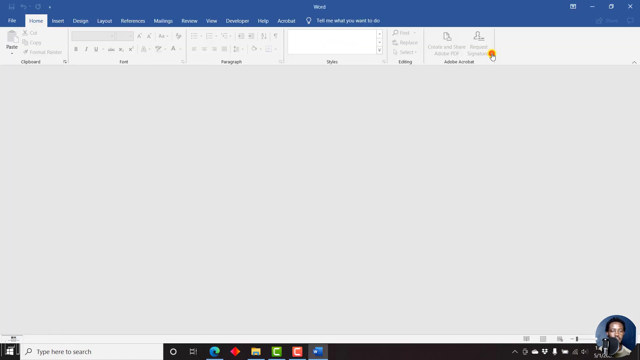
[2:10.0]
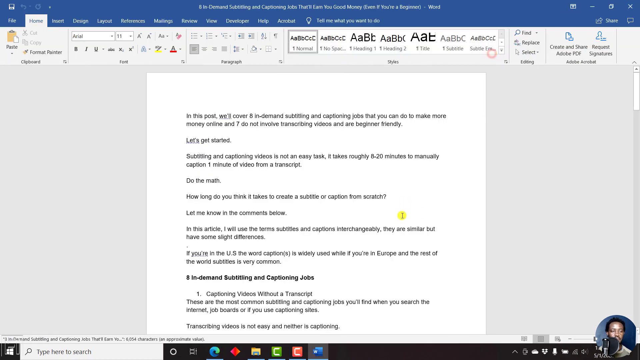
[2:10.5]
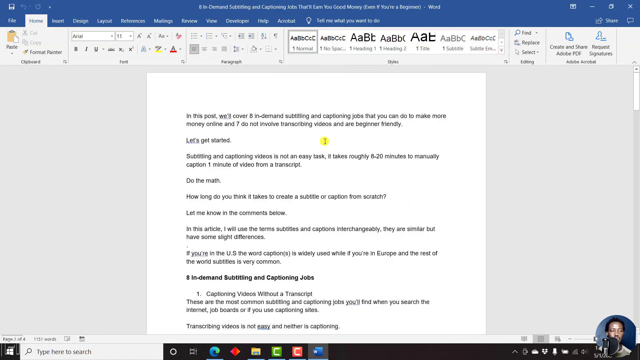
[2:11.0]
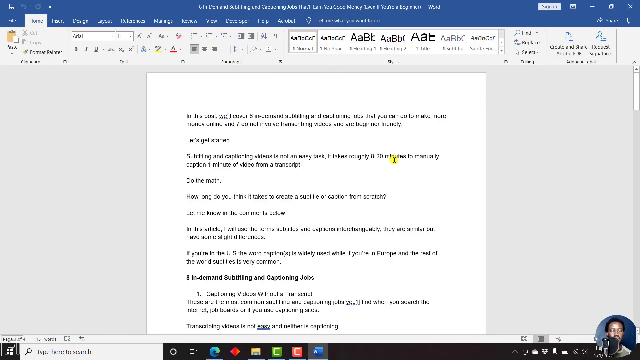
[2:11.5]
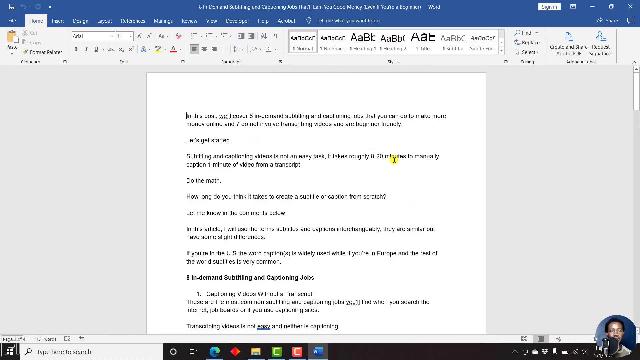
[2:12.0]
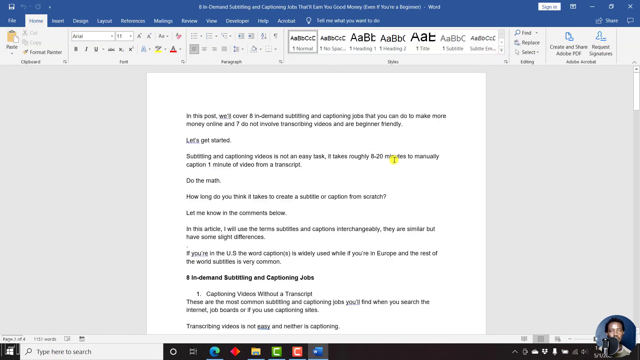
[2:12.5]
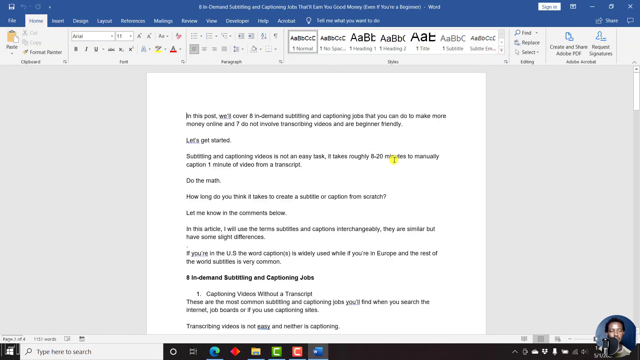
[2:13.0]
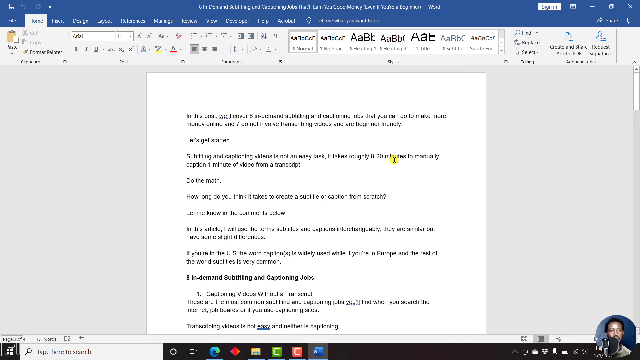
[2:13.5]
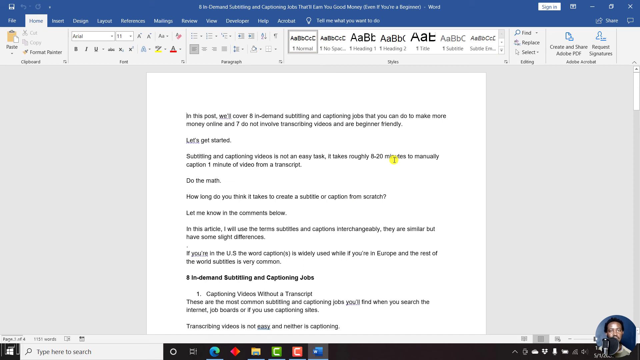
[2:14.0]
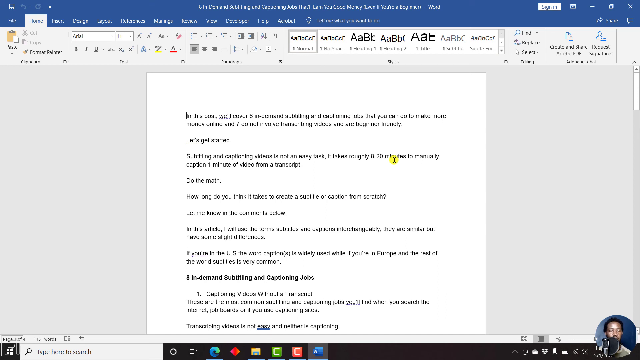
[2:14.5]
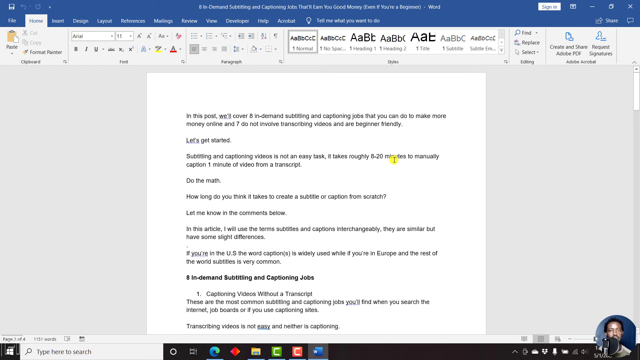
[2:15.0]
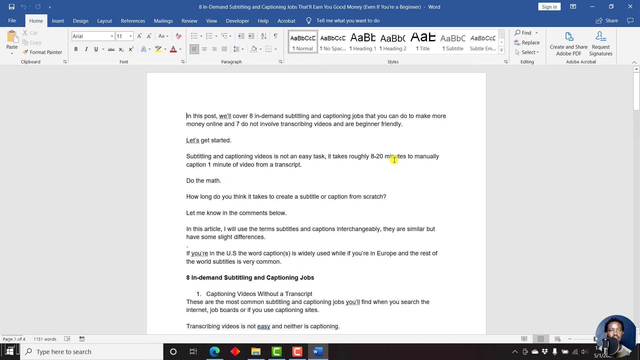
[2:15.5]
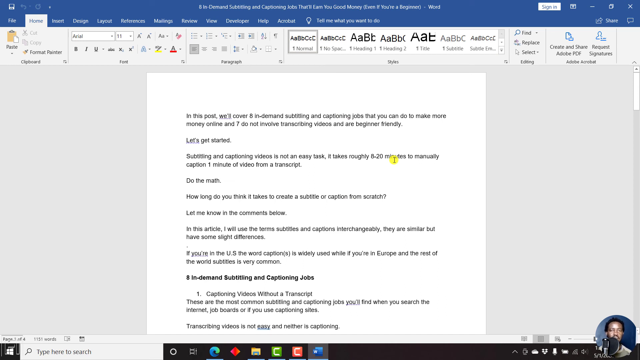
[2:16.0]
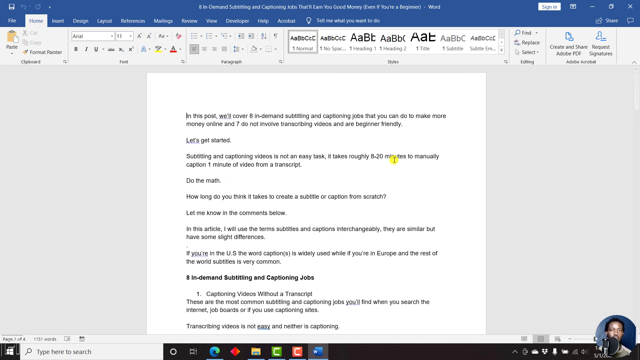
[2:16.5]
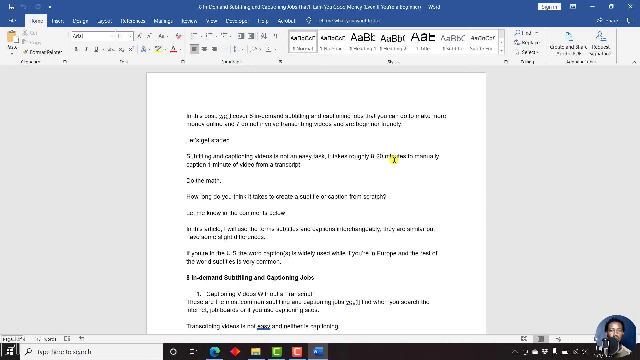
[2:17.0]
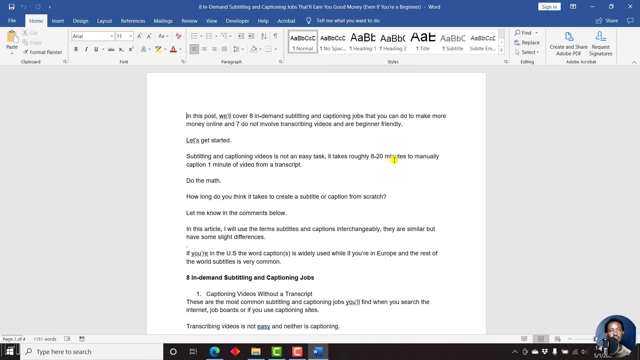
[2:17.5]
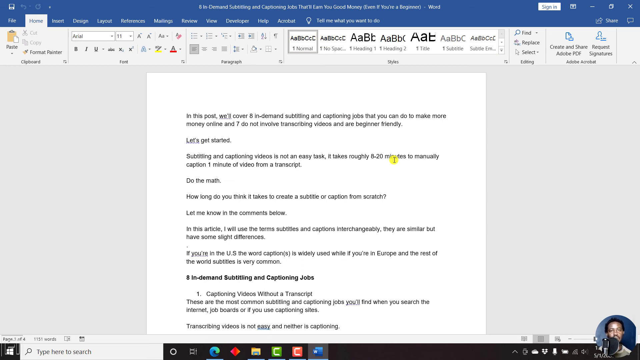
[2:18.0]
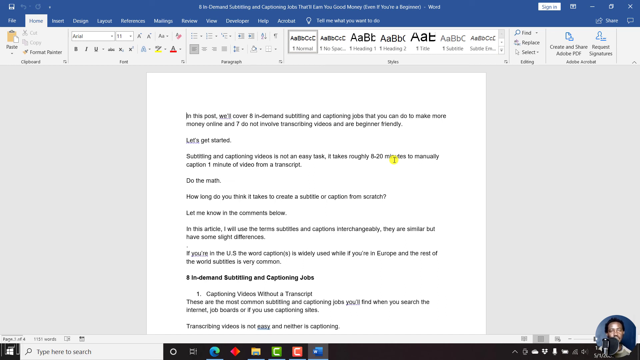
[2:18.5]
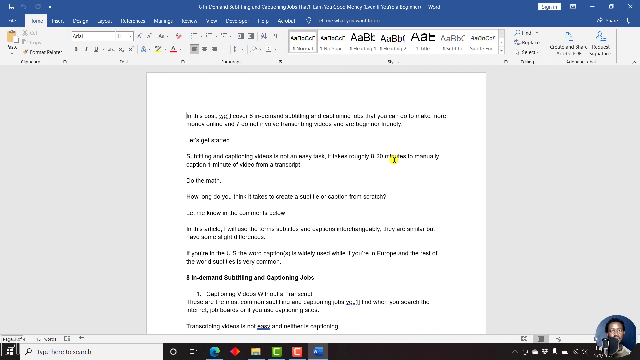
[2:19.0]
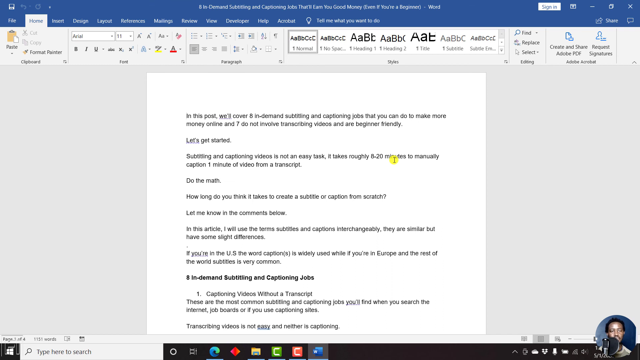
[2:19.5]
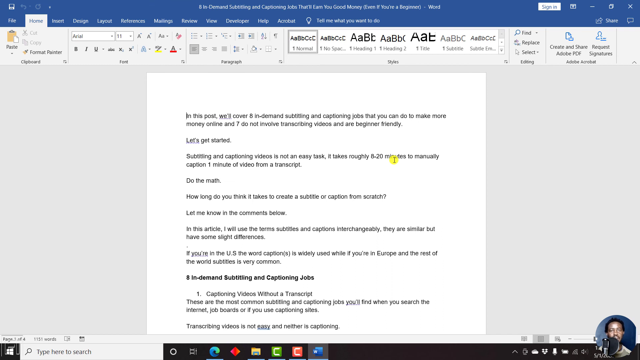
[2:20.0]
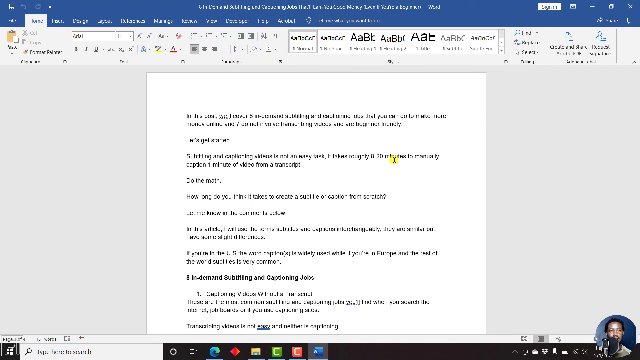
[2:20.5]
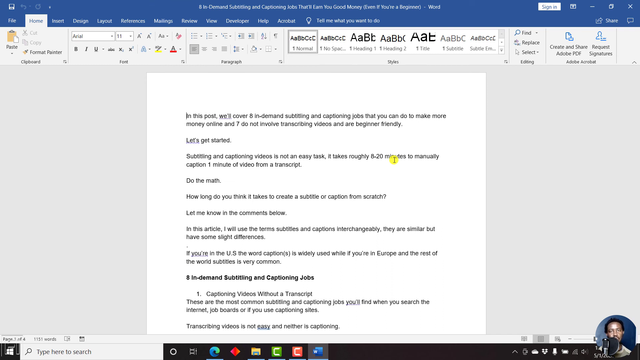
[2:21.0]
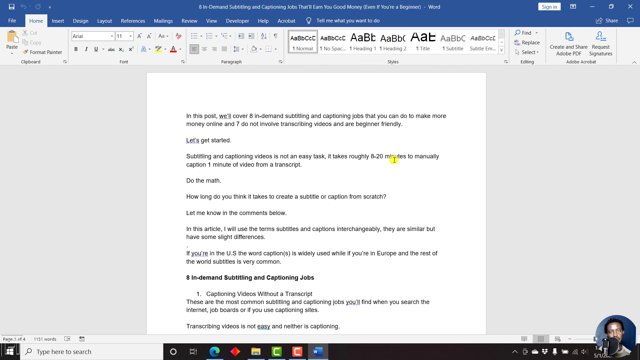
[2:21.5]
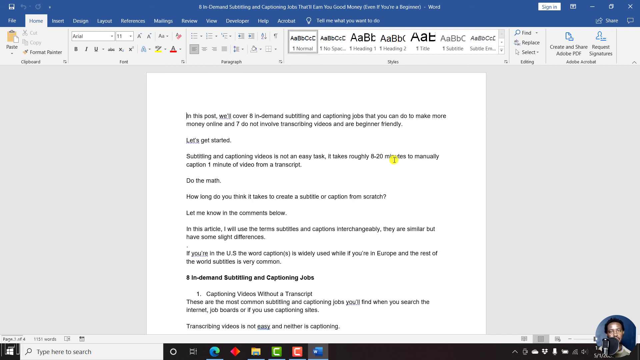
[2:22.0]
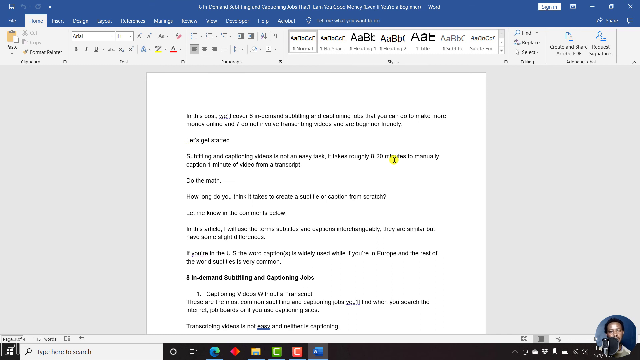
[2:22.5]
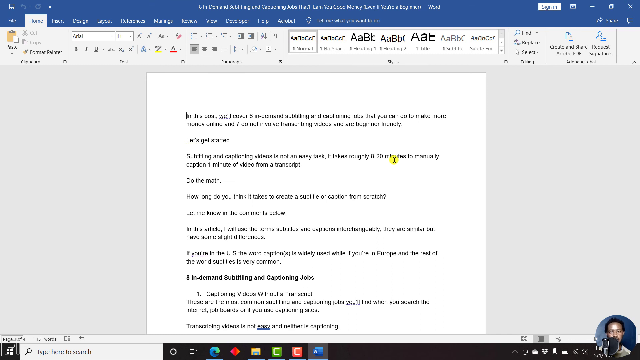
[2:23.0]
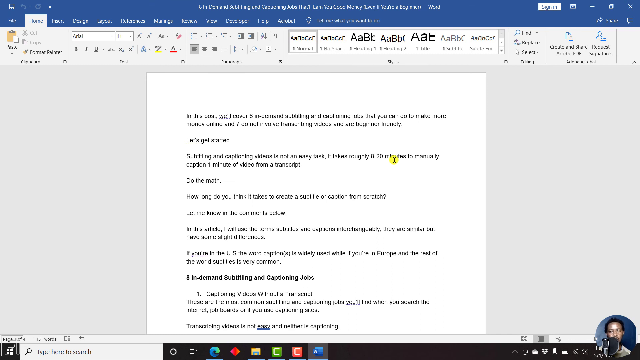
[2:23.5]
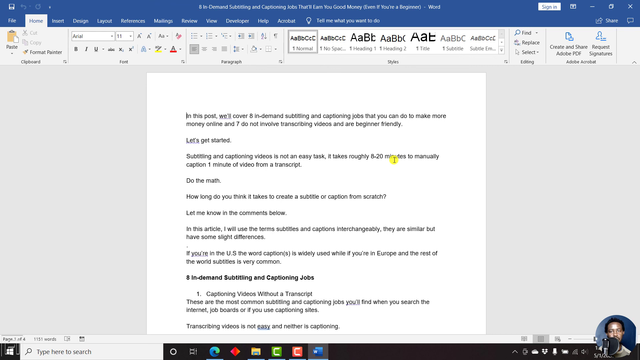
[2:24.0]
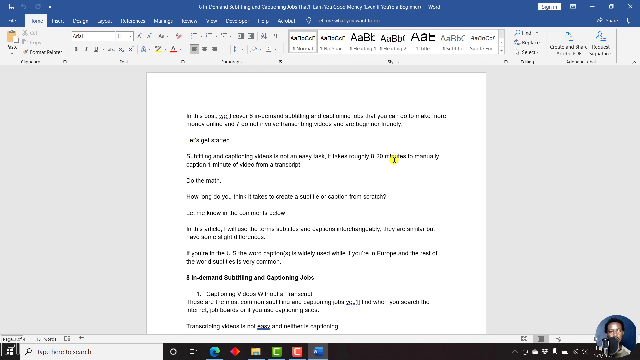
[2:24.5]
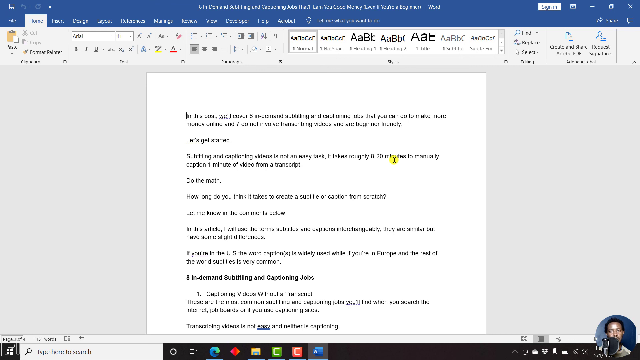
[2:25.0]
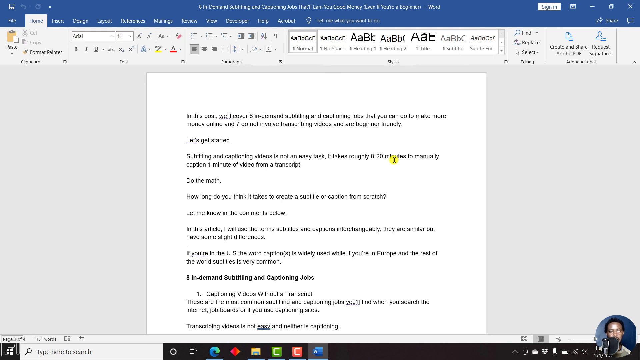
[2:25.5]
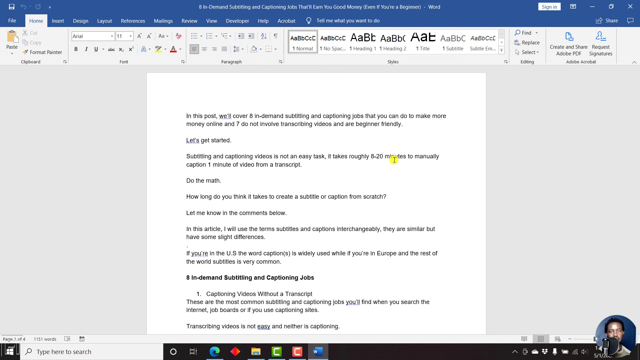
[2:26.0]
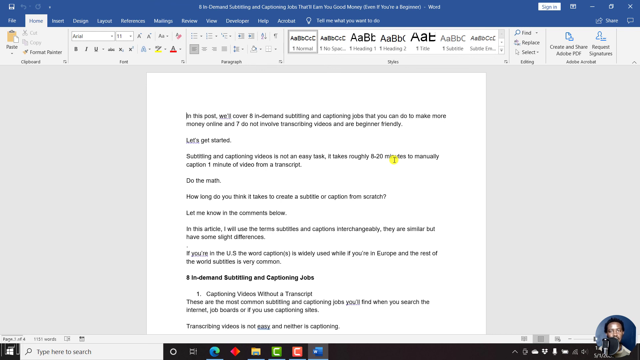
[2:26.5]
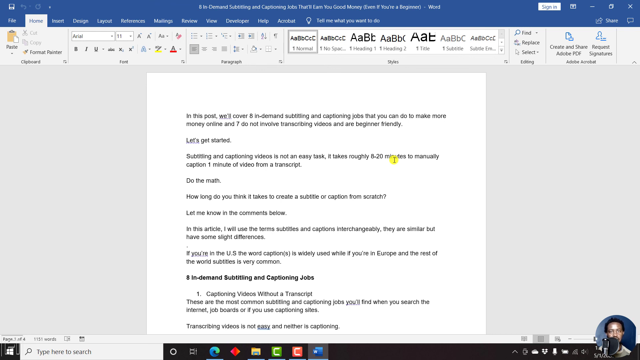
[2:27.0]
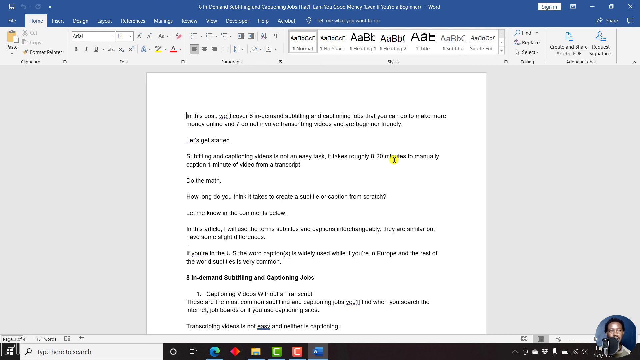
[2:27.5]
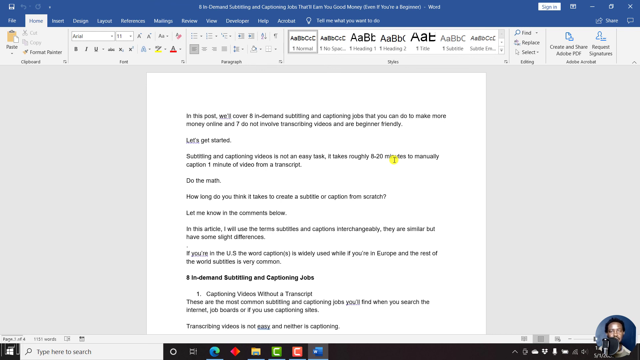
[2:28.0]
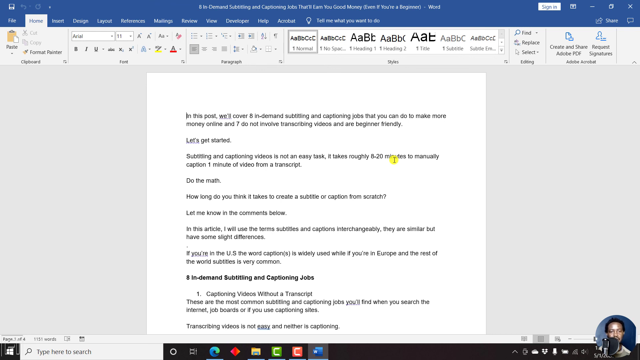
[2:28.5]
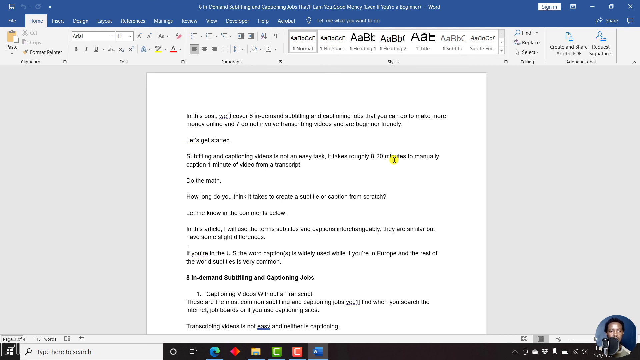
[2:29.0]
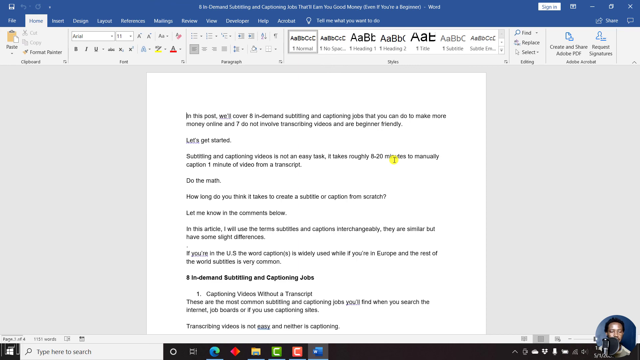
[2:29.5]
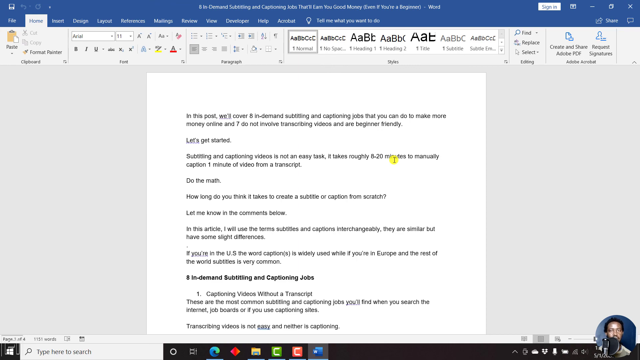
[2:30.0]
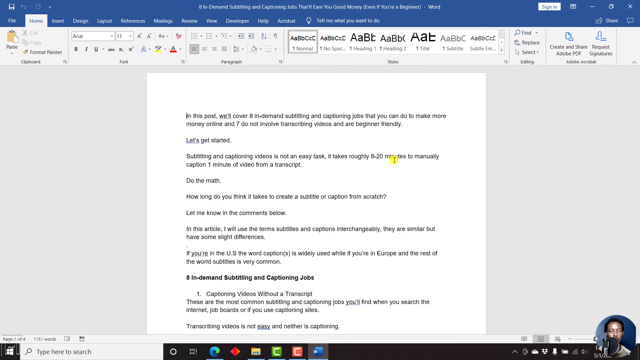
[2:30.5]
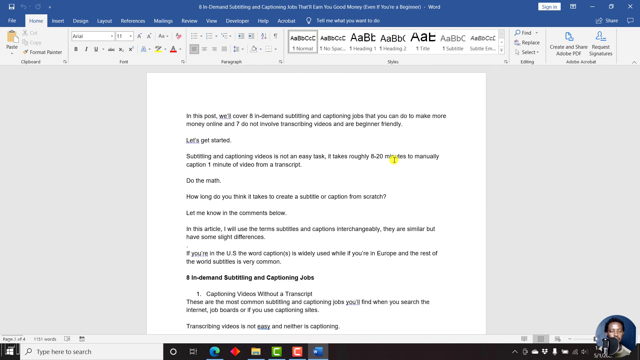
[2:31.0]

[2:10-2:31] The empty Microsoft Word program with no file loaded is on screen. This time the file opens successfully in Microsoft Word, showing the same lines of text as the Google document. The cursor moves in a circular manner over some of the lines of text, then stops over the word "minutes". The cursor has something like a yellow highlight circle over it. Nothing else happens on the screen; the Microsoft Word program stays open. There are eight lines of text, and below them in bold it says "Eight in-demand subtitling and captioning jobs". Below that it says "Number one, captioning videos without a transcript. These are the most common subtitling and captioning jobs you'll find when you search the internet, job boards, or if you use captioning sites. Transcribing videos is not easy, and neither is captioning." The Microsoft Word program remains on screen.